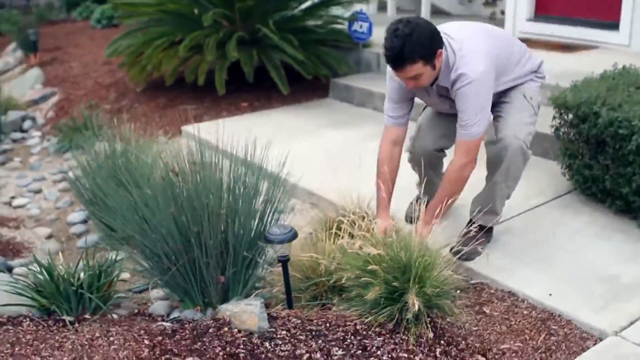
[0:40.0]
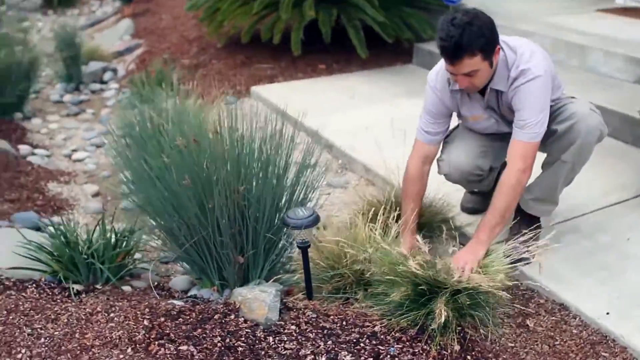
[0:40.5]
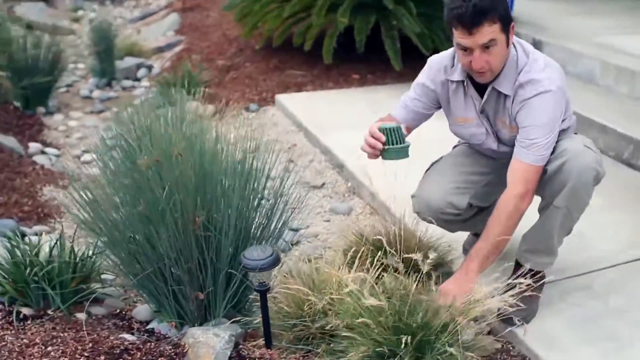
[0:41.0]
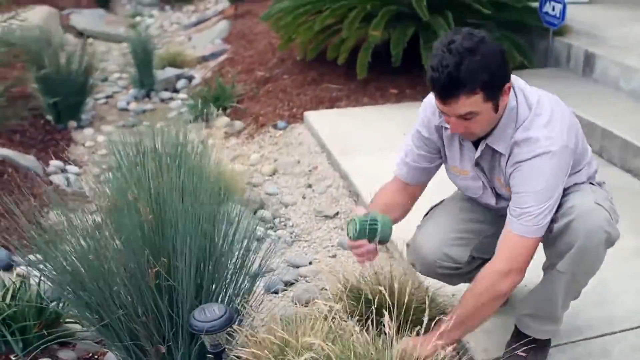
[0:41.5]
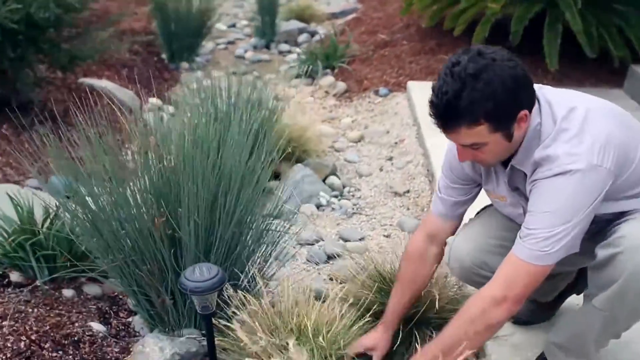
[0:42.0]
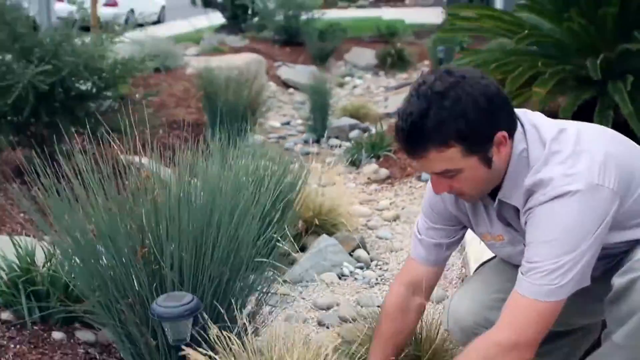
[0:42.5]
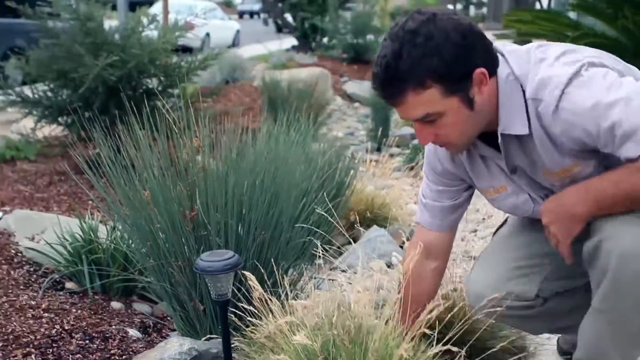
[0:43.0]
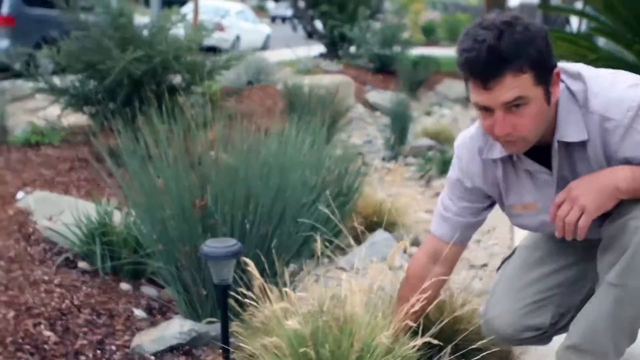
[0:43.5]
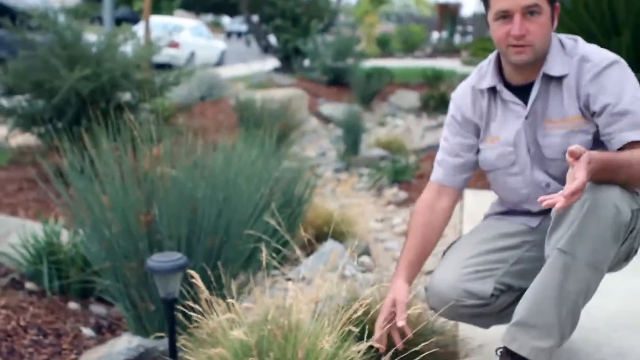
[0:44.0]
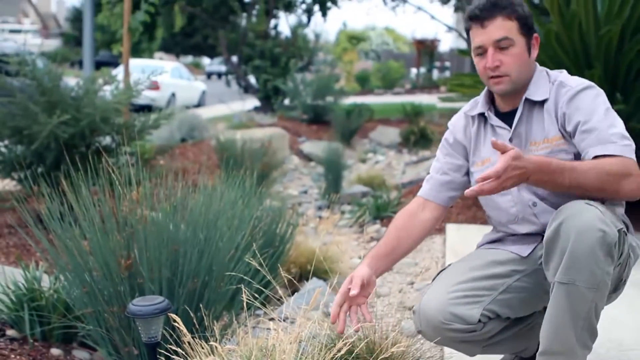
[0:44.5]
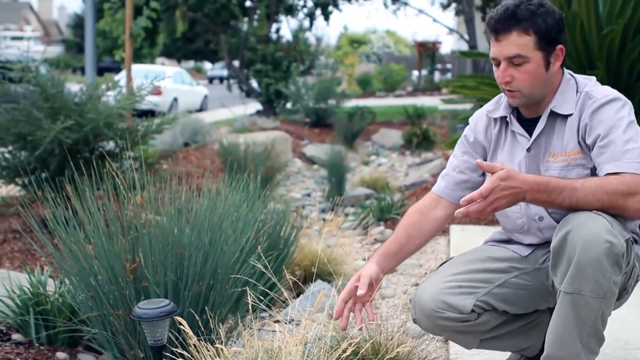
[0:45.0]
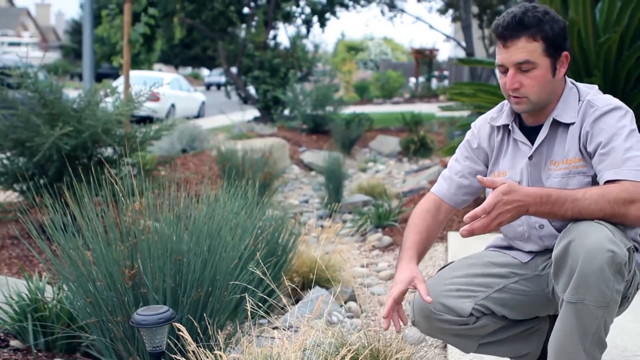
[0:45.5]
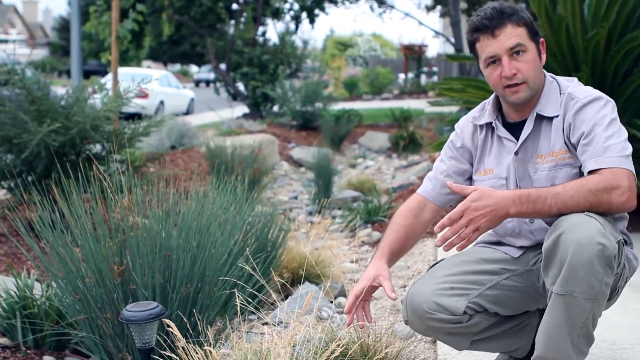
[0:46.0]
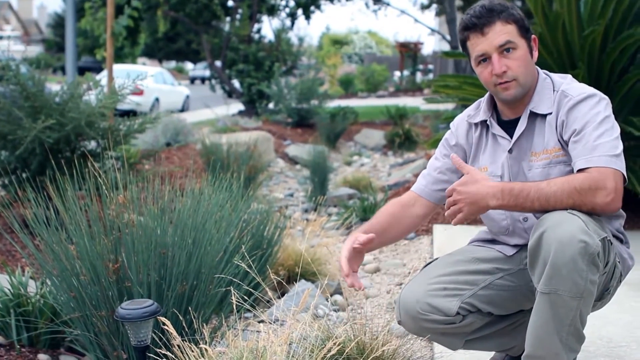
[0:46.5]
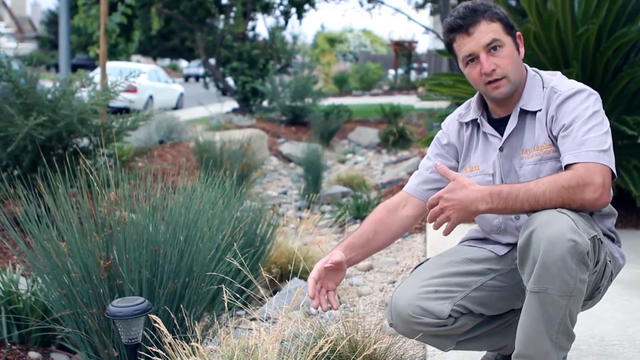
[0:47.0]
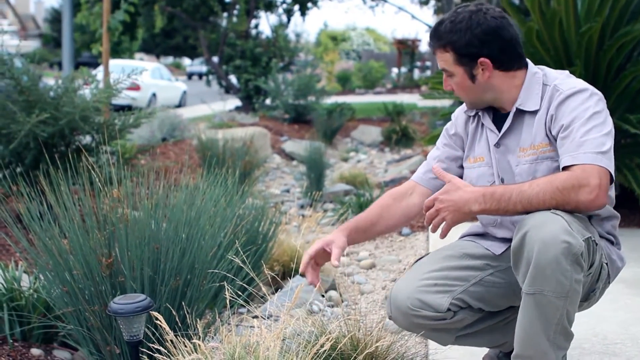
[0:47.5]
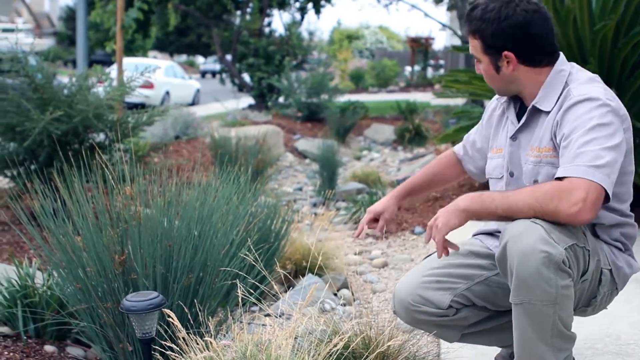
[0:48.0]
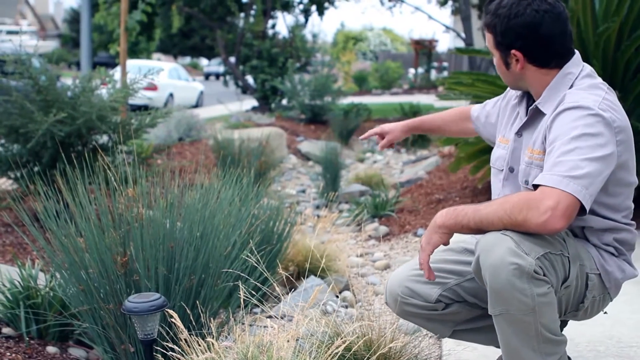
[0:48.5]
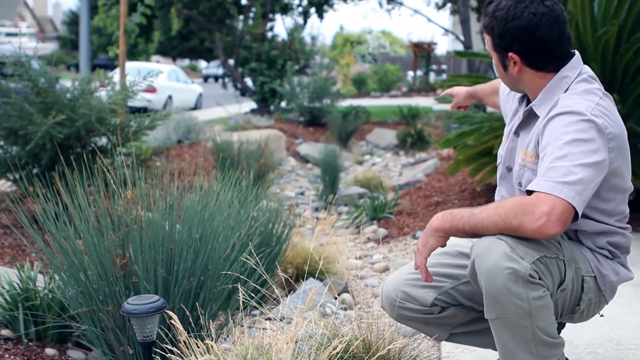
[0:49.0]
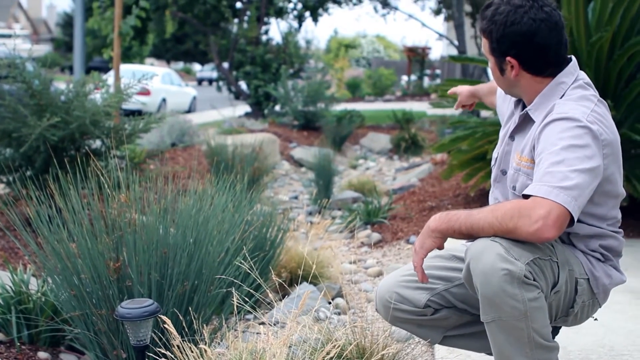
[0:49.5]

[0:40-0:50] Alan, the young man, tends to the plants, taking care of them. He pulls something out of a plant that is not part of the plant; it appears to be green and is small but not very small, perhaps something he uses to irrigate his crops. The crops are various shades of green, light and dark. He leans over the flowers and plants while on a concrete surface. In the background is what appears to be his house. There are rocks of different sizes, some small and some big. A white private car and a charcoal SUV are parked on a tar road in the background.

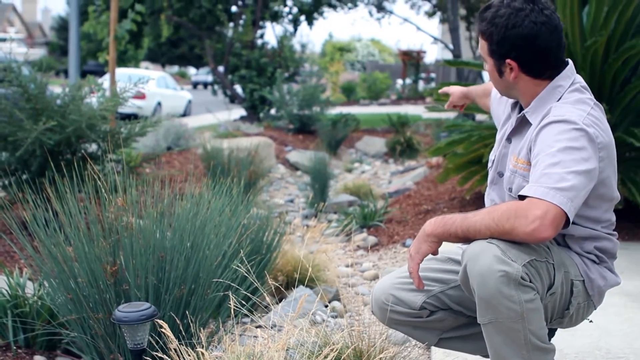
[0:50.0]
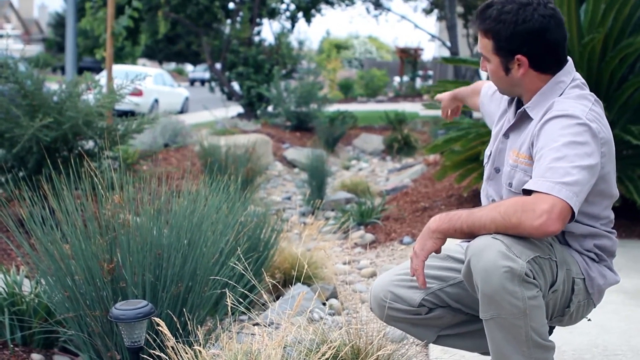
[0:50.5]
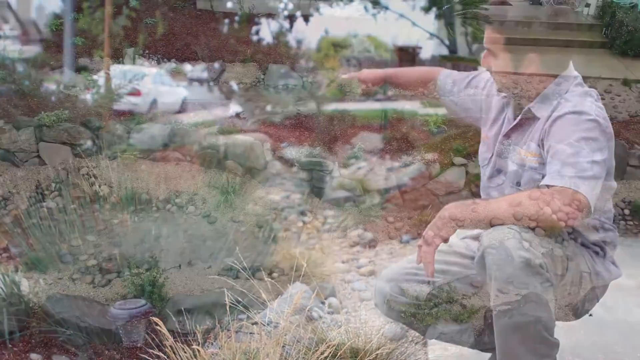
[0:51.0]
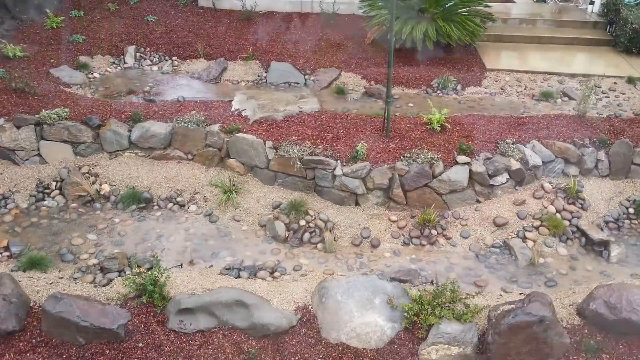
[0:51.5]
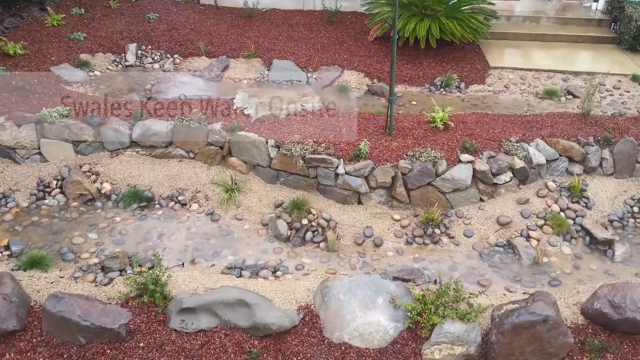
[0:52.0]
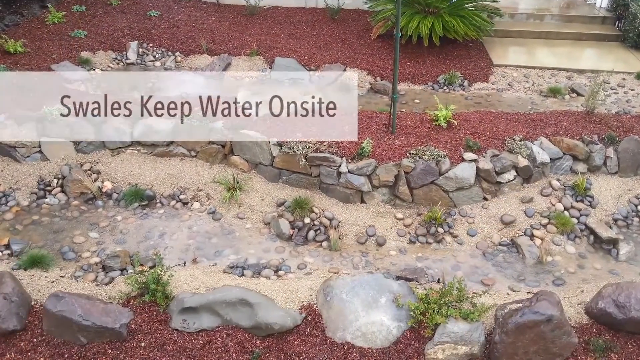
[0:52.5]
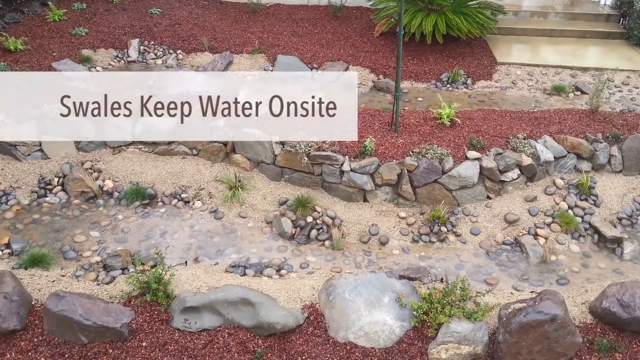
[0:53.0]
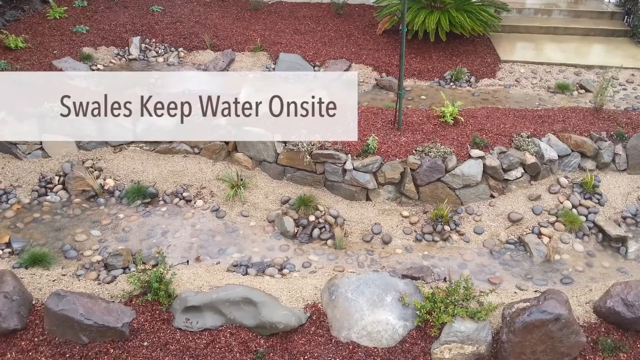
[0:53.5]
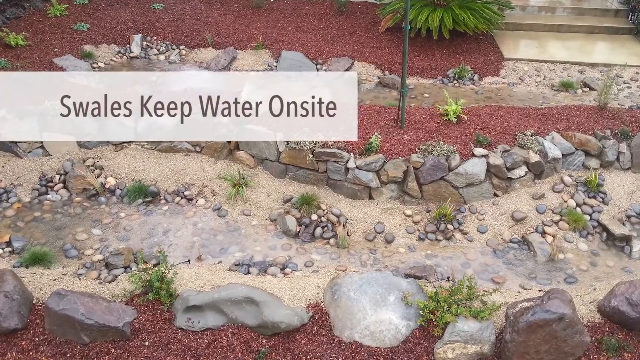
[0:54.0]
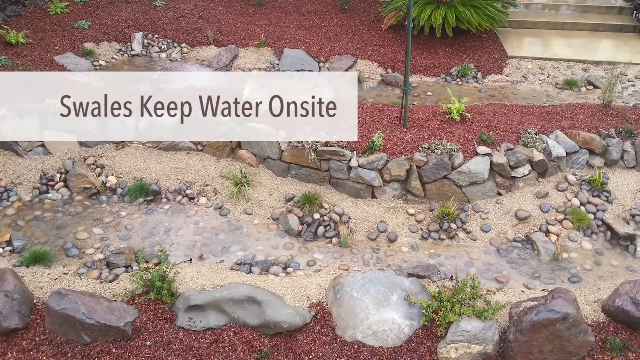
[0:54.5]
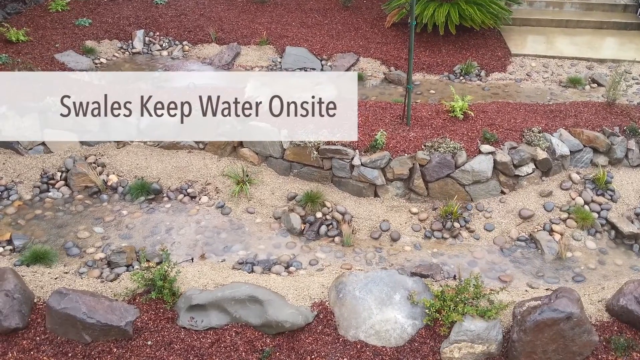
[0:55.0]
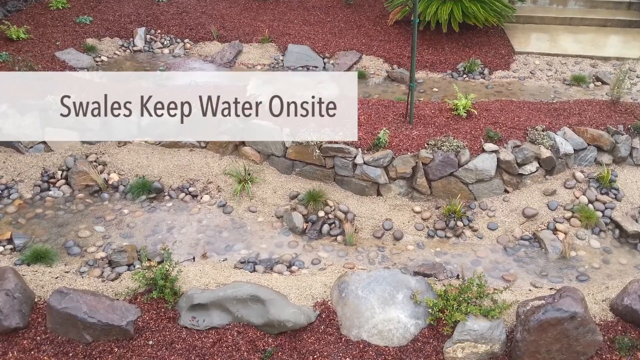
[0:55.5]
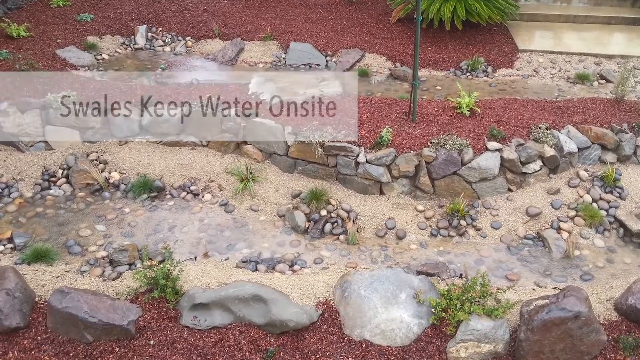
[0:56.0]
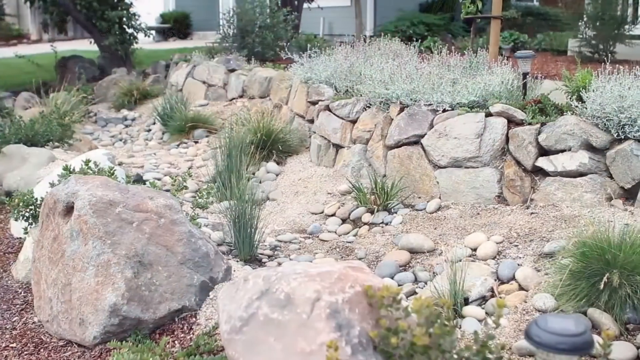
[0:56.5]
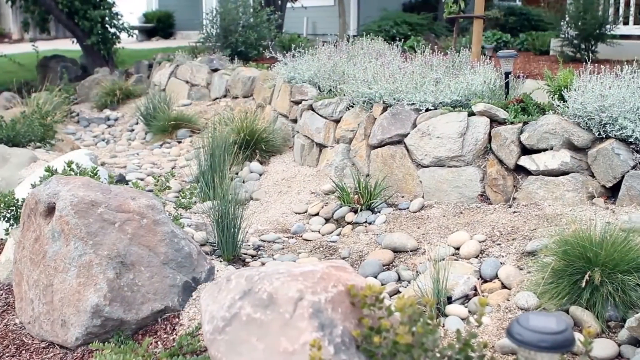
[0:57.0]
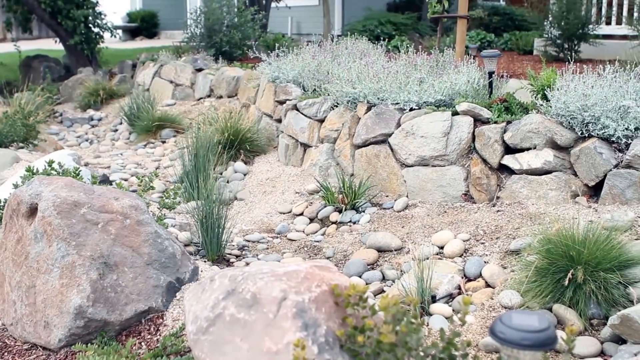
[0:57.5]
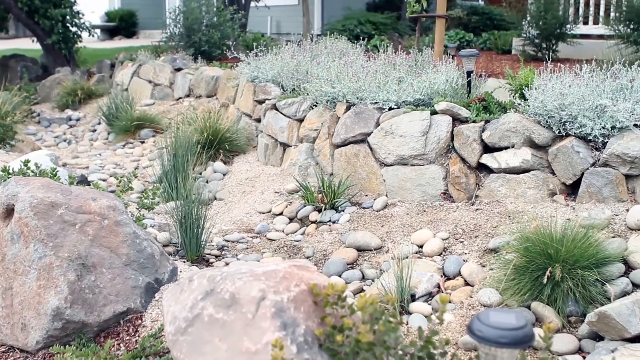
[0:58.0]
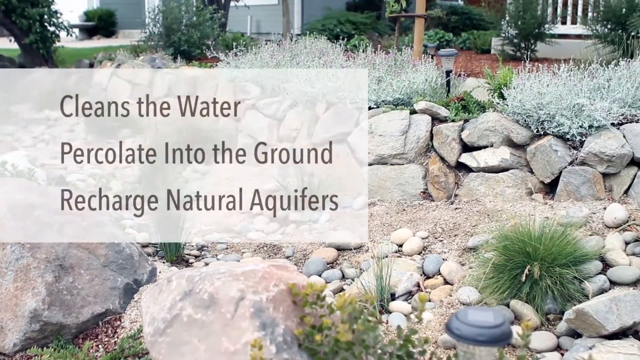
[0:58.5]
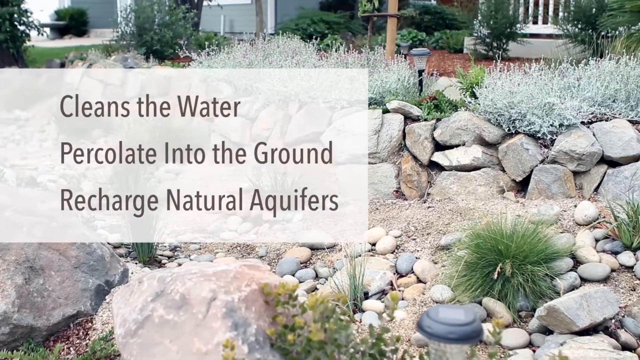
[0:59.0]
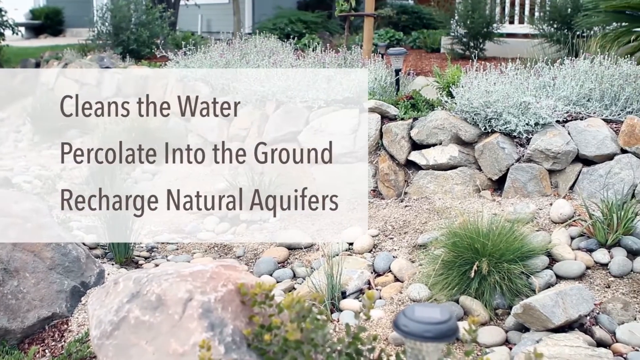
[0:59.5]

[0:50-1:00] A man in his early 30s appears, along with text including "keep water on site" and "cleans the water." Rocks of different sizes and shapes serve as decoration: some are big, some small, some circular or roundish, while others look square. There are green plants and small trees, some light green, almost grayish, and others normal or dark green, along with brown sand that looks very rich. The land where the plants are planted looks very fertile, with soil that looks rich. In the background a few cars, including the white private car and the charcoal SUV, are parked next to a tar roadway, and very big trees are visible.